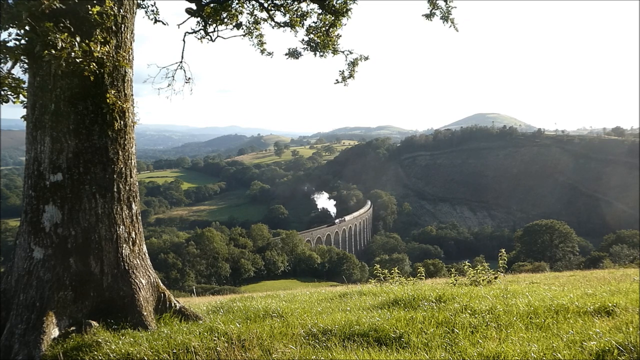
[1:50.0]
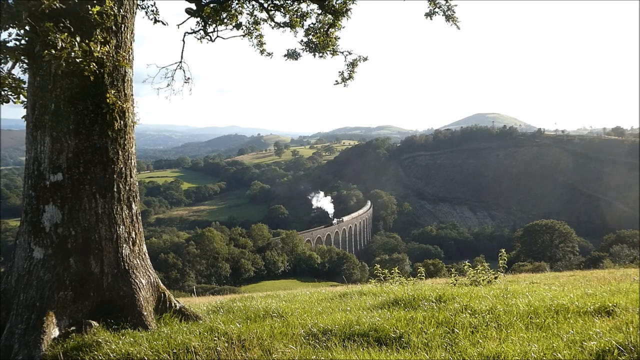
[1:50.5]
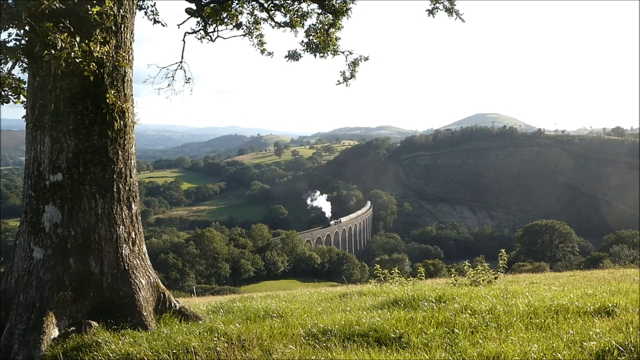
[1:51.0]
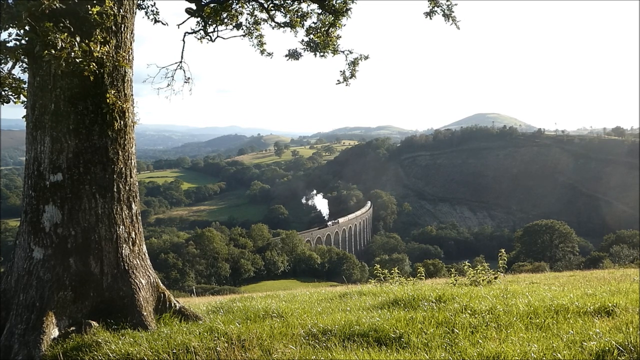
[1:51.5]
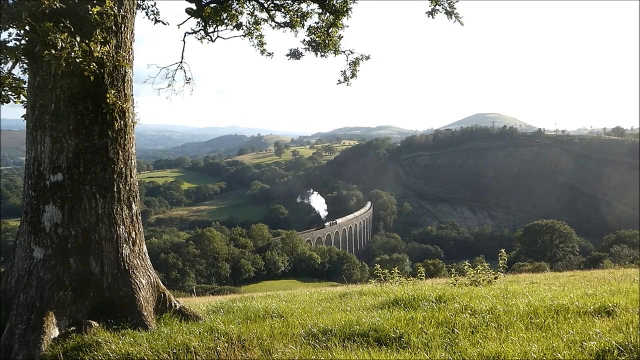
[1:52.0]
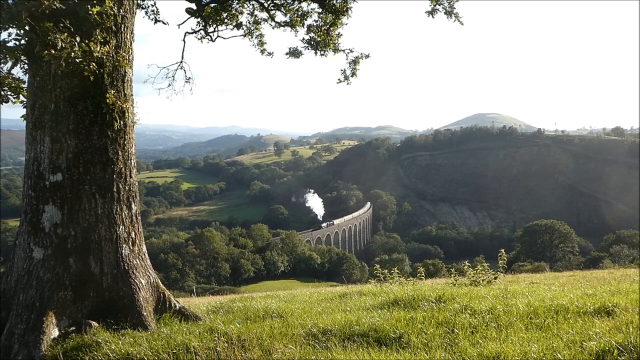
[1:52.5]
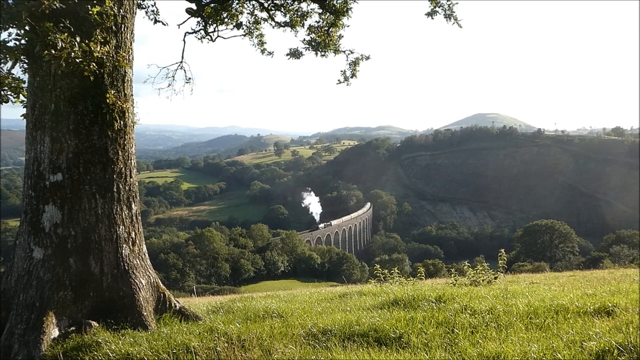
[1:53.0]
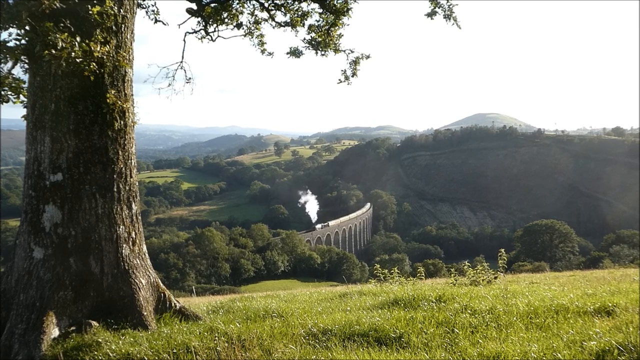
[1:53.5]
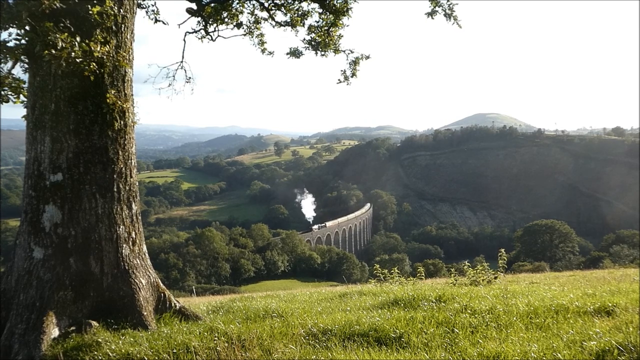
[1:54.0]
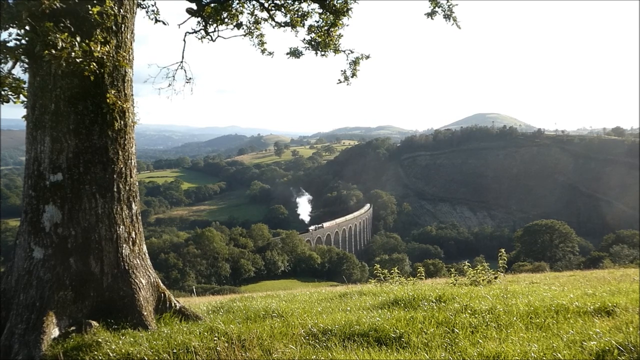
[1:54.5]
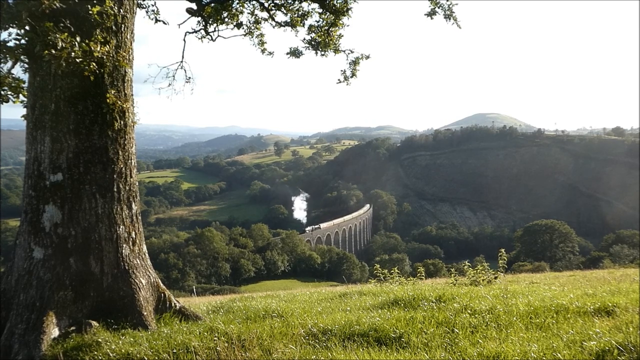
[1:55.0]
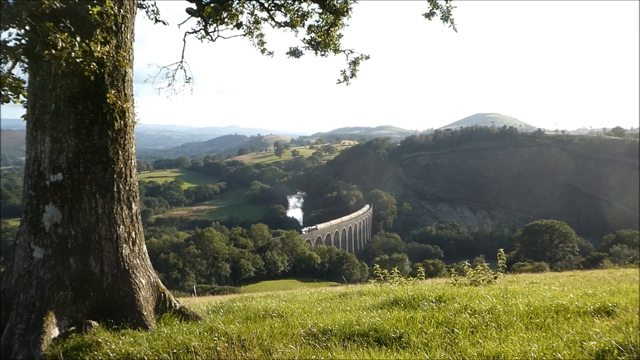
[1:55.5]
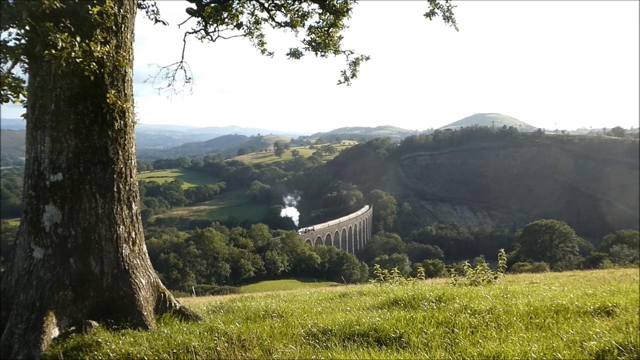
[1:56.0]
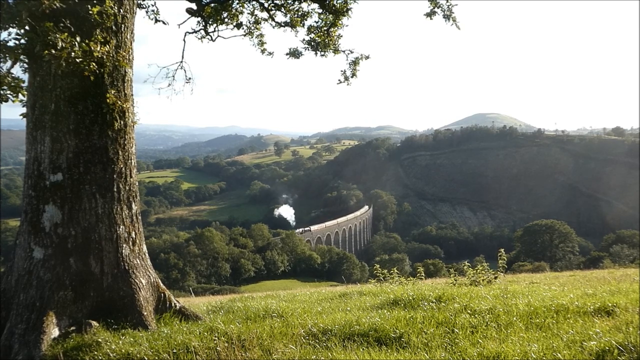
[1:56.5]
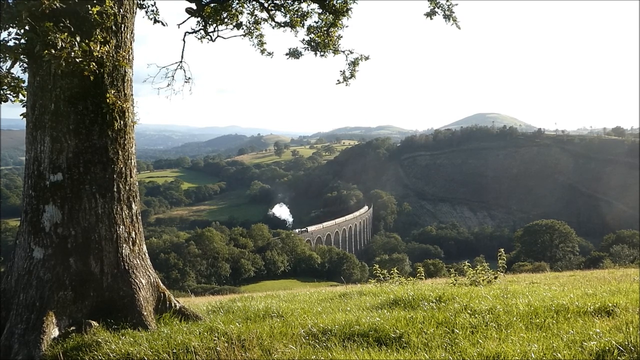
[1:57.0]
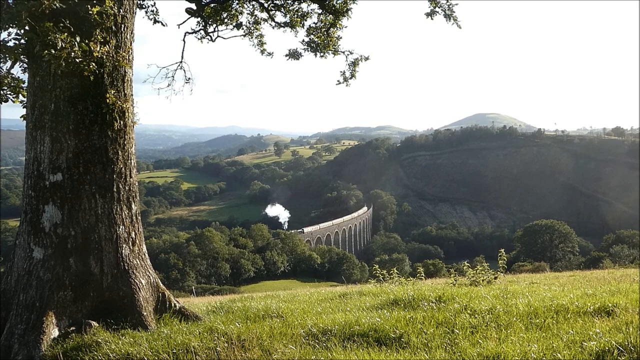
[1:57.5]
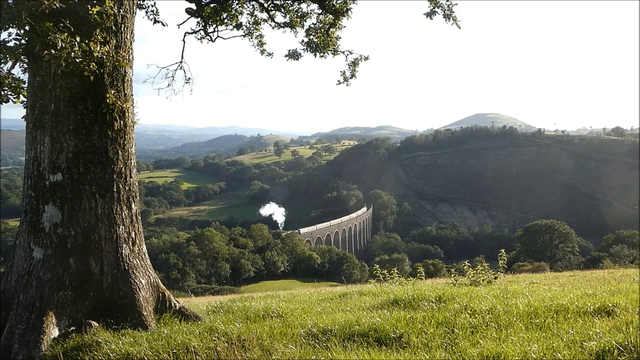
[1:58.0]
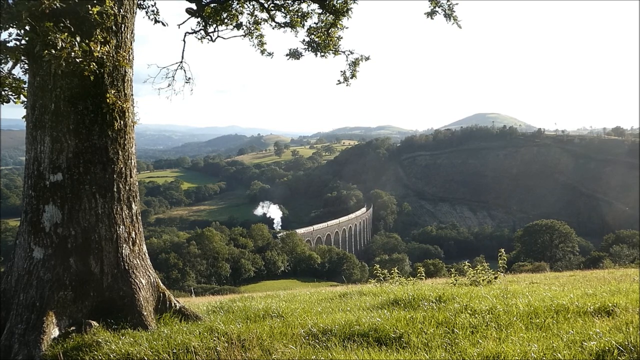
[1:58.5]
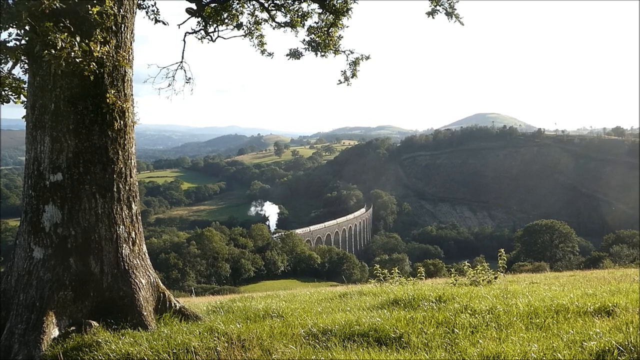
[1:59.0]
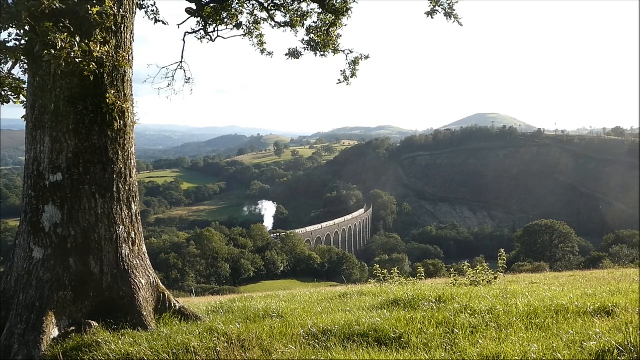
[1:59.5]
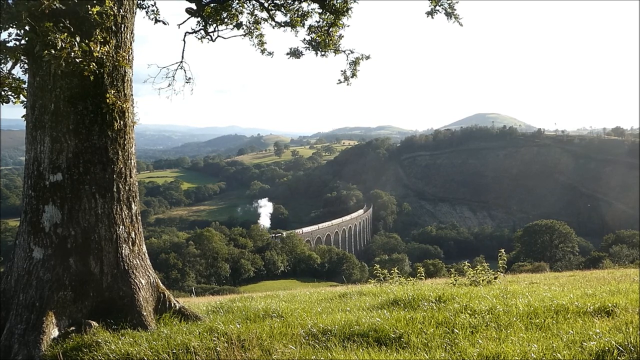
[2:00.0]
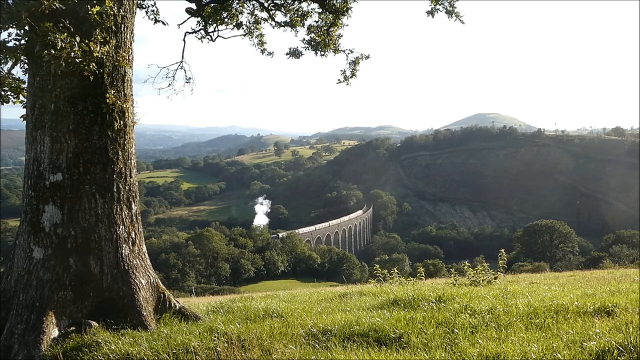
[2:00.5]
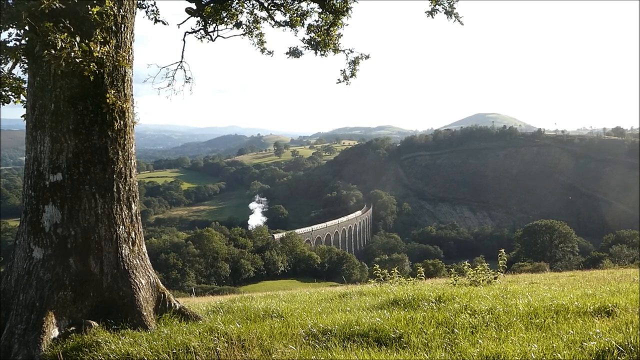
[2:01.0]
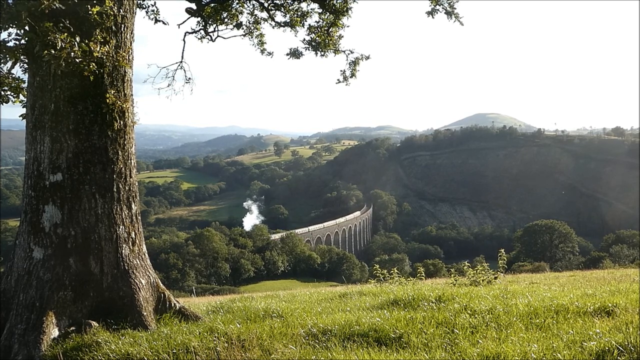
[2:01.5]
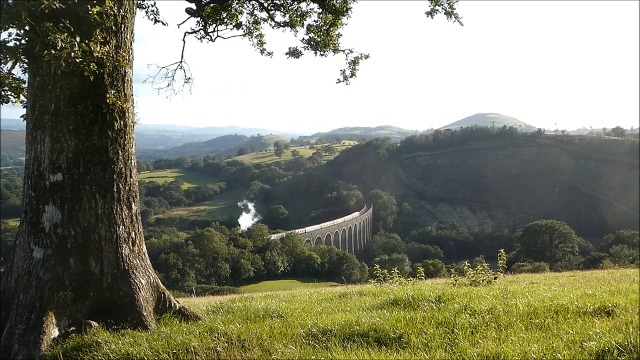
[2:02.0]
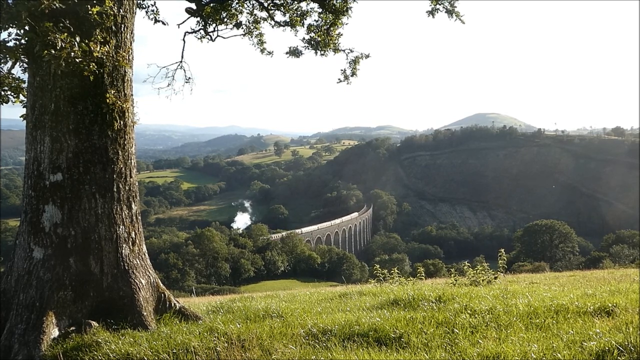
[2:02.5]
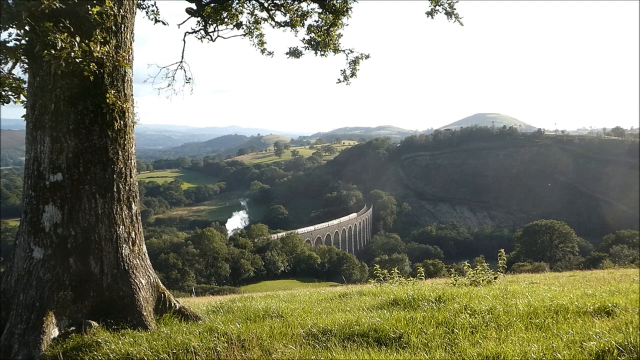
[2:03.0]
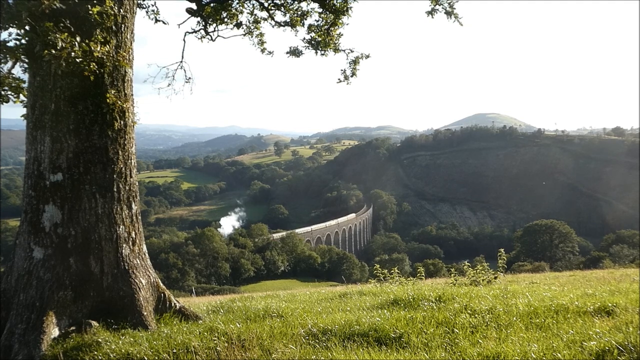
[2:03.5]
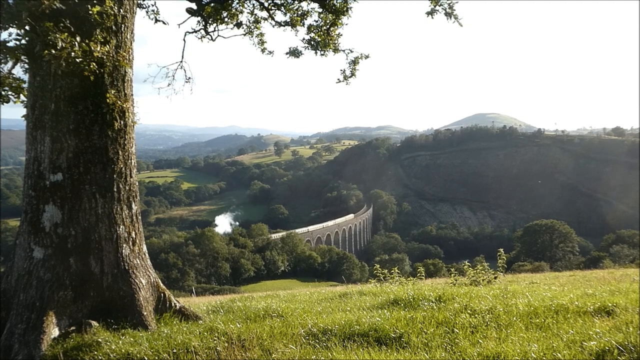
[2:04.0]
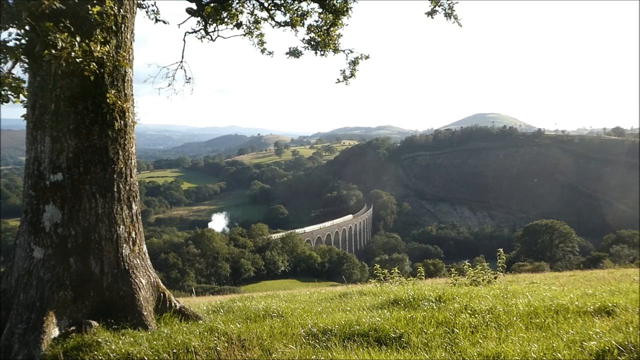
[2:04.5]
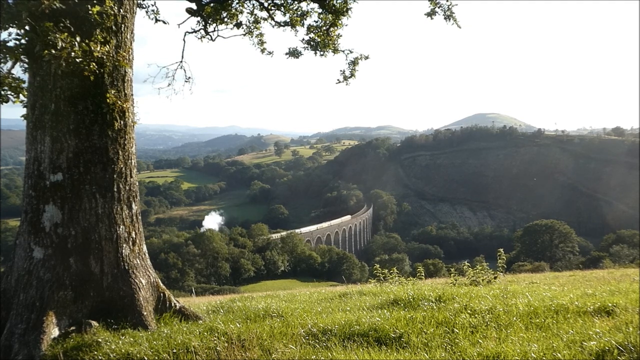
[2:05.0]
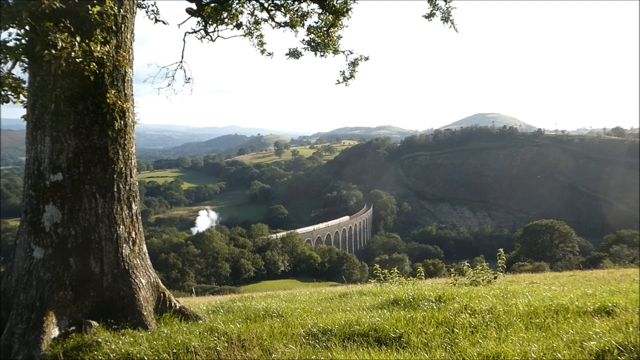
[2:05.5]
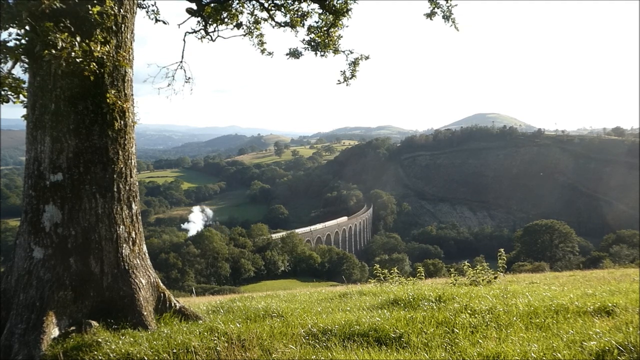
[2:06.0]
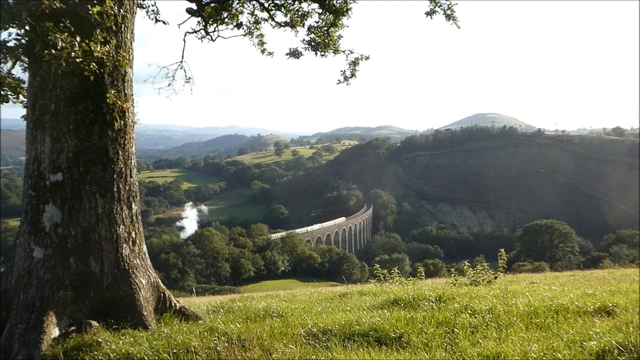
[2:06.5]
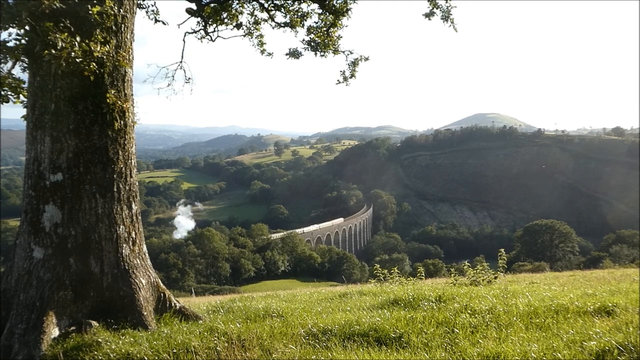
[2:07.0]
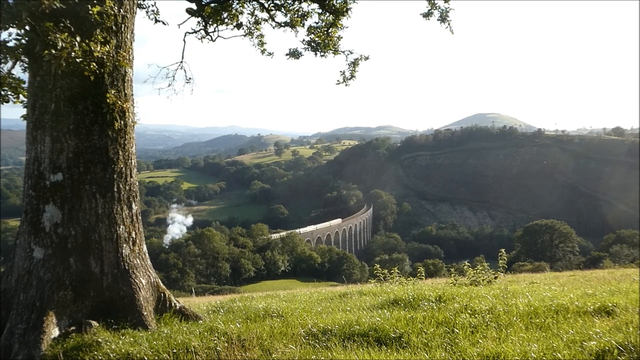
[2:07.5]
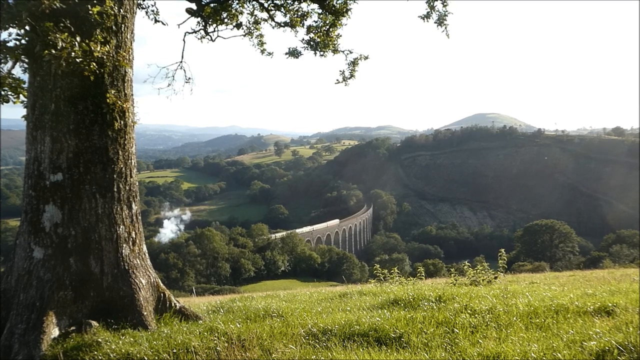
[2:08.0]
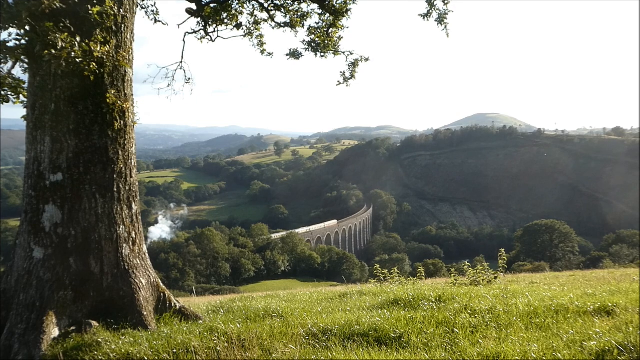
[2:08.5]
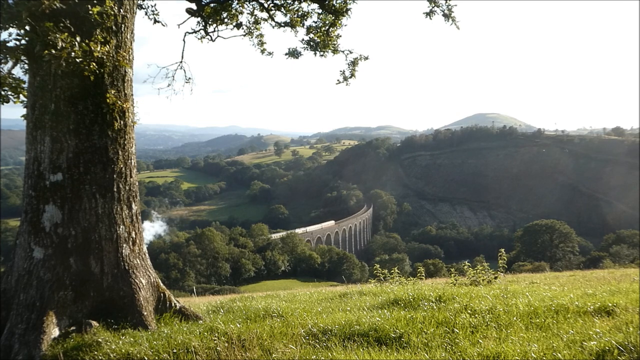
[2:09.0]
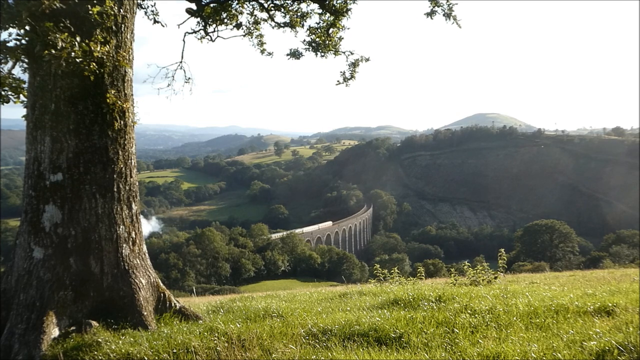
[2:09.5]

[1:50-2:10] The train comes to cover the entirety of the visible track and makes its way toward the front, but it is then cut off by green shrubs or green trees on the left-hand side, heading behind the main tree trunk on the left that takes up about 20-25% of the left side of the screen. The train becomes covered by the shrubs, greenery and trees on the left, but its smoke lingering on top of them shows it is still traveling there. The train is not the full length of the visible bridge portion; when it enters, a little bit of the bridge remains free. The day is very bright, the sky is white and clear, and the scene looks somewhat foggy overall.